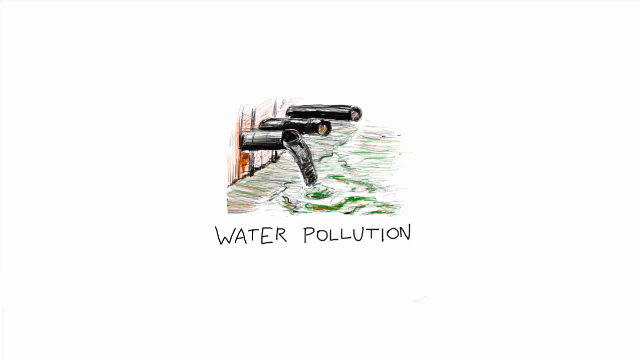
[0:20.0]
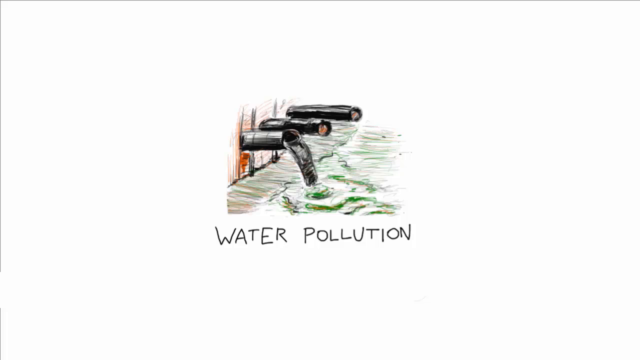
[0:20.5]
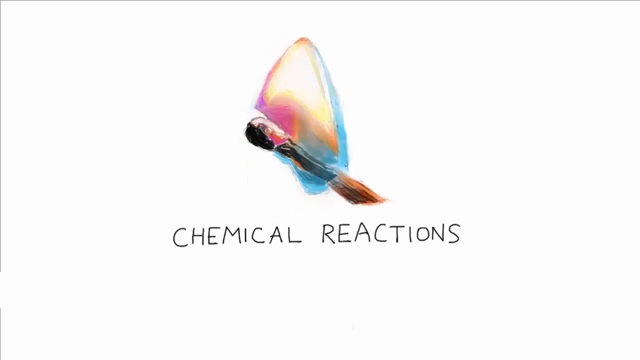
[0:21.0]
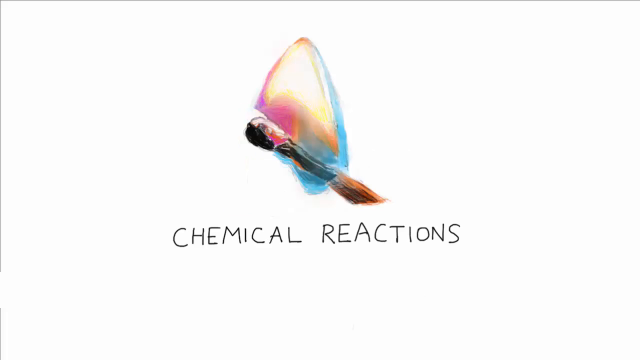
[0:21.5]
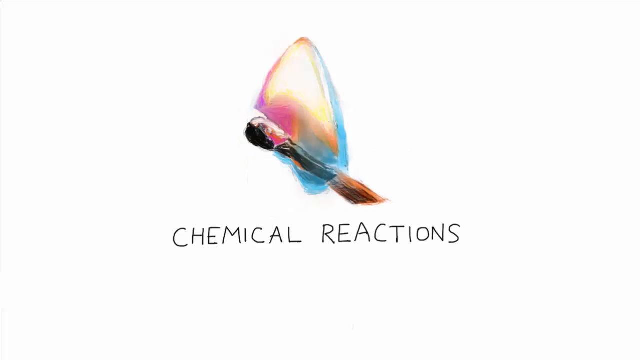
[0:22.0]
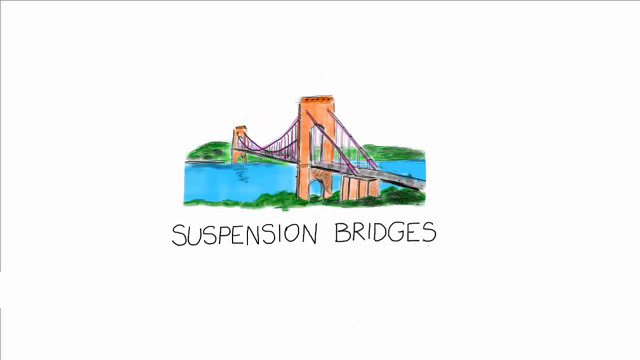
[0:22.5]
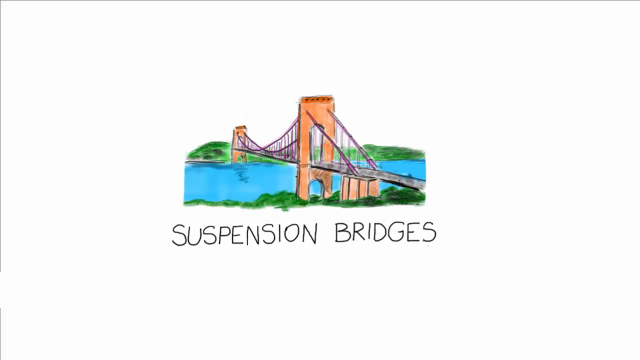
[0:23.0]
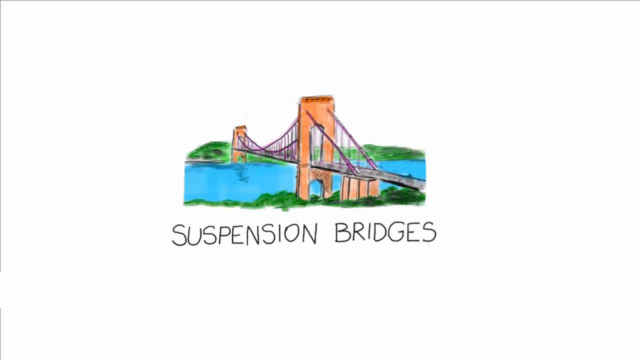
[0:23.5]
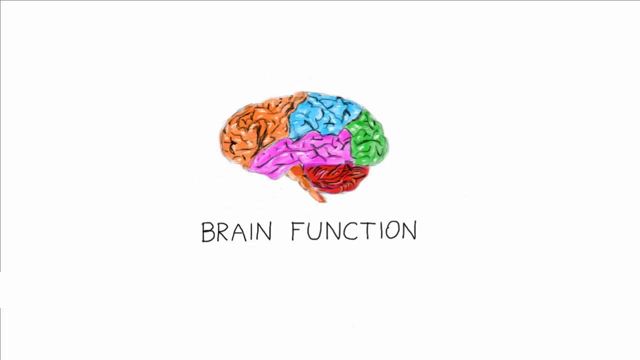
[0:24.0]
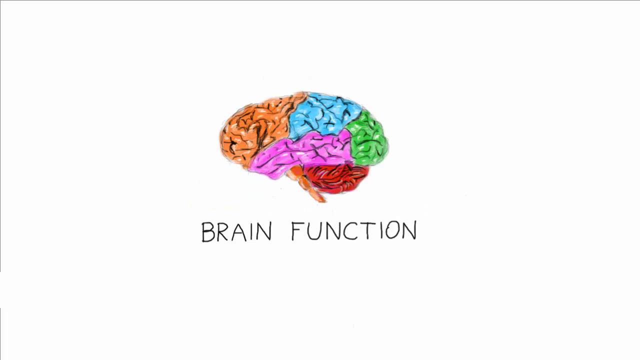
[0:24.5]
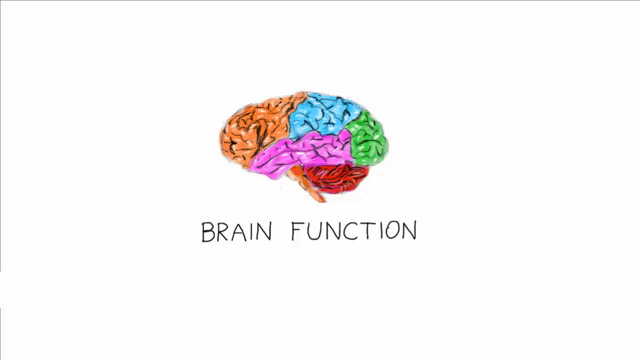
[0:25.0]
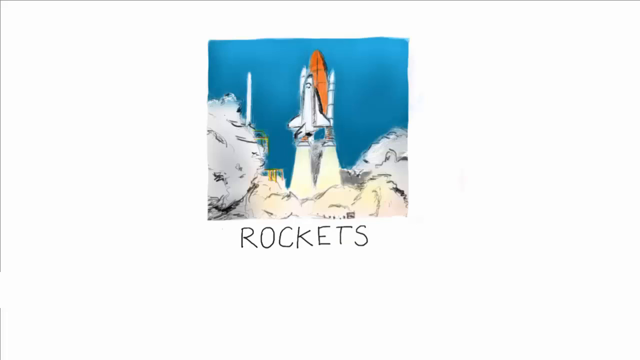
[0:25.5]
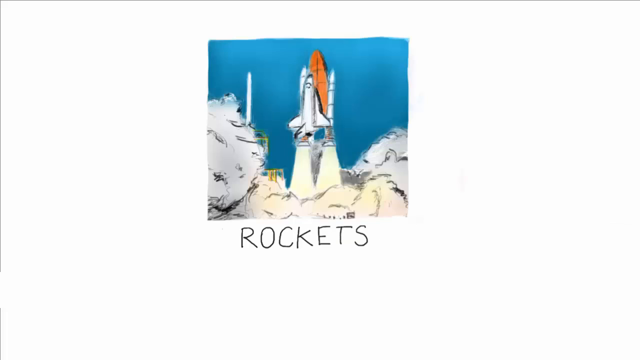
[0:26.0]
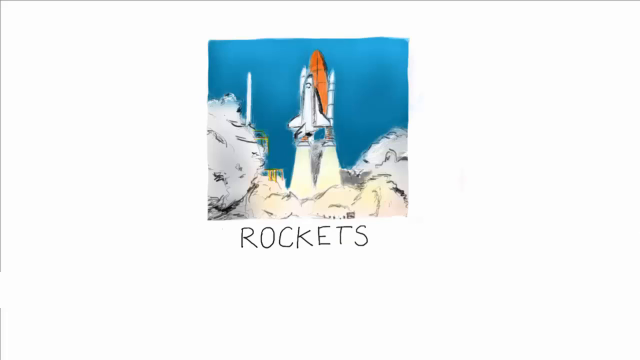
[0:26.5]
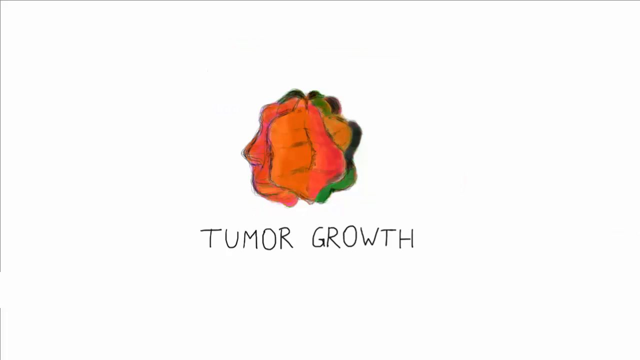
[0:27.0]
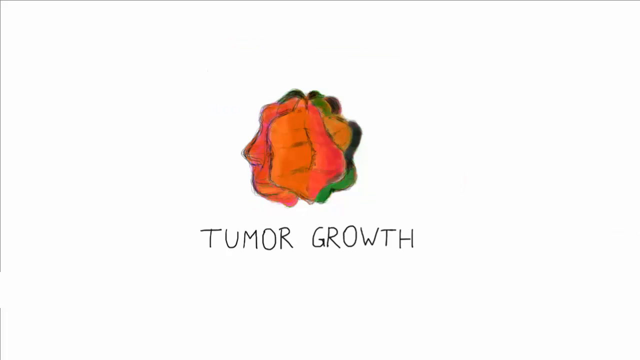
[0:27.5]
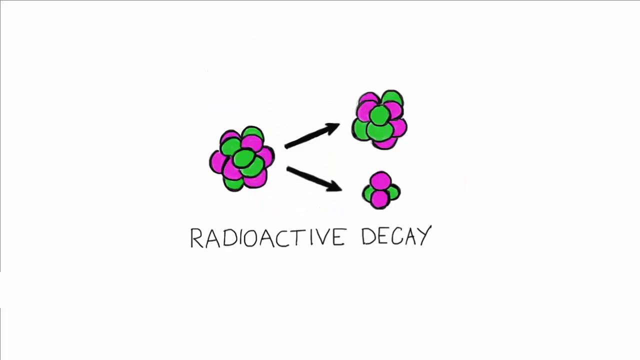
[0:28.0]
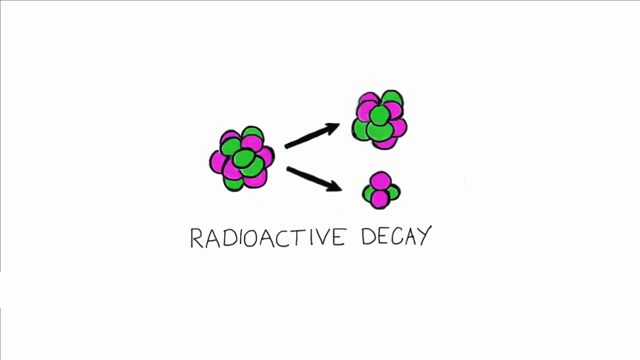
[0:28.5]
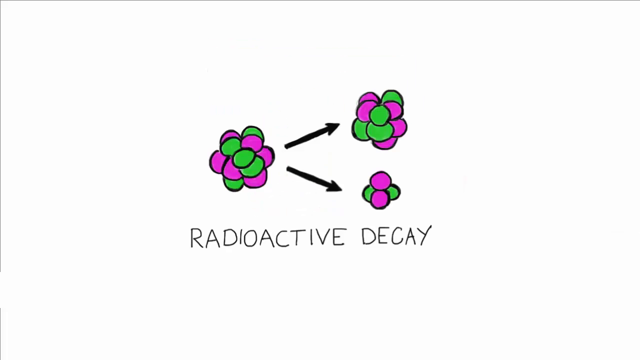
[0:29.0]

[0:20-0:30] "Water pollution" is written toward the bottom. Above it is a crude drawing showing a bit of a wall with a black pipe sticking out. The first pipe has sludge pouring out into the water below, and some green comes down just above the words "water pollution." Next comes "chemical reactions." Above it is something like a black paintbrush with a brown brush part, angling down to the right. There is some blue going up the right side and pink coming down the left side, and the center is sort of yellow, almost shaped like half an egg. Then there is a drawing of a bridge over some water, with grass on either side, coming from the left and angling down to the right, with "suspension bridges" written under it in black. Next, "brain function" appears with a drawing of a brain. Across its top are brown, then blue, then green in the front; under those, going to the back, is purple, with red underneath that. Then a rocket shoots off, with "rockets" under it. A tumor is drawn with "tumor" under it. Next, green and purple circles are mixed together just left of center, with a black arrow pointing up and a black arrow pointing down. The same drawing follows, except with a little less on top and only four on the bottom, and "radioactive decay" is written.